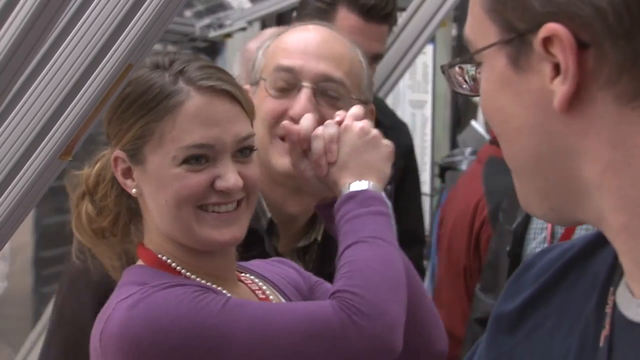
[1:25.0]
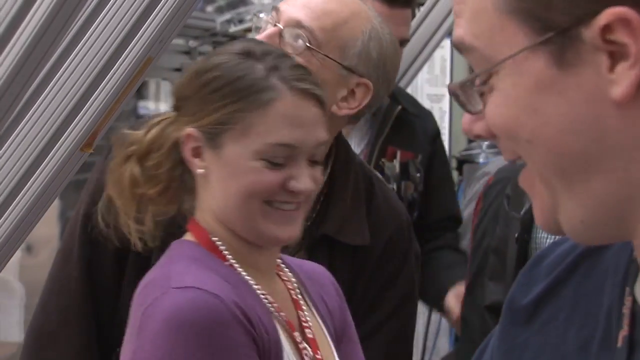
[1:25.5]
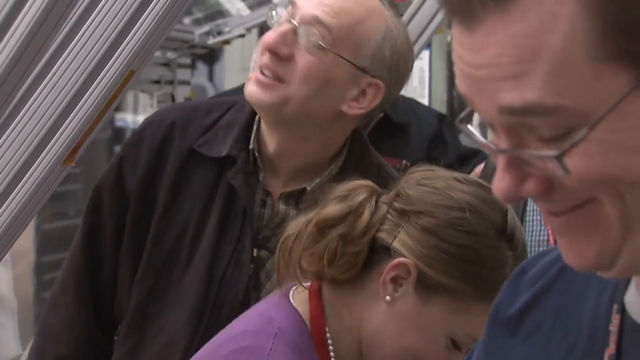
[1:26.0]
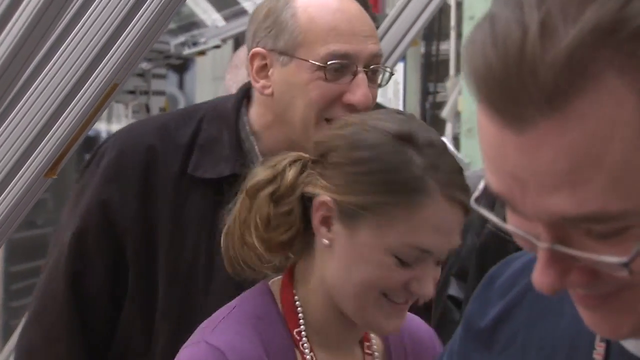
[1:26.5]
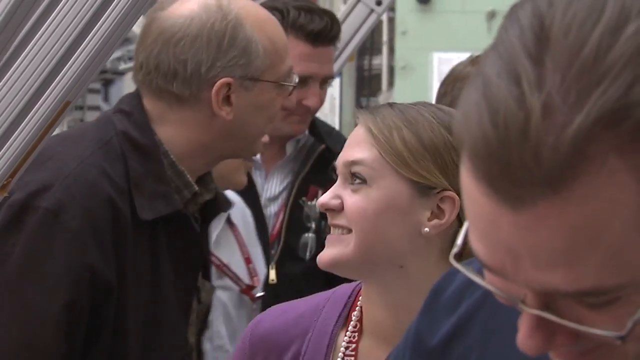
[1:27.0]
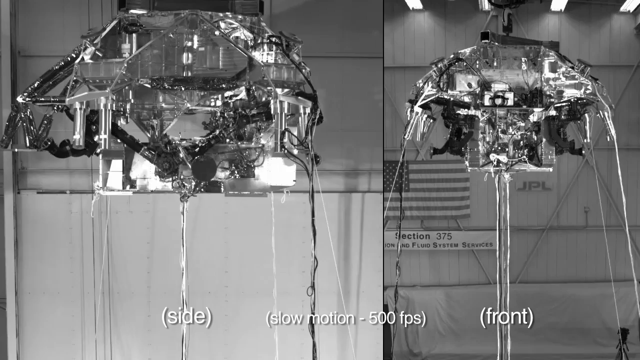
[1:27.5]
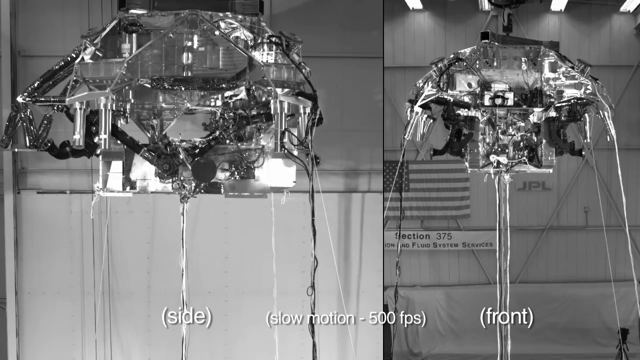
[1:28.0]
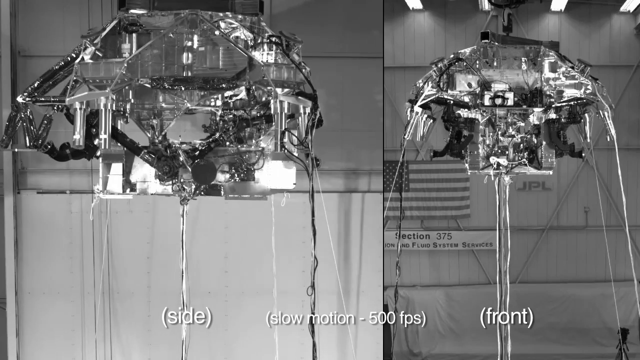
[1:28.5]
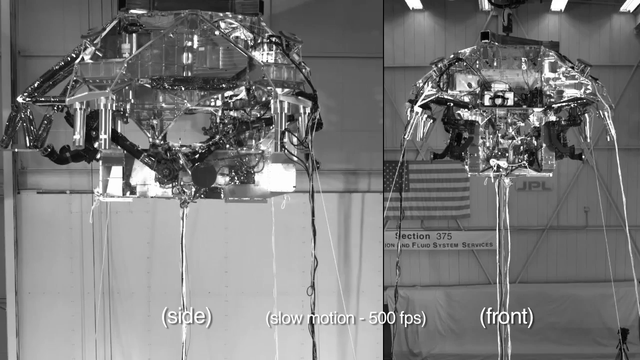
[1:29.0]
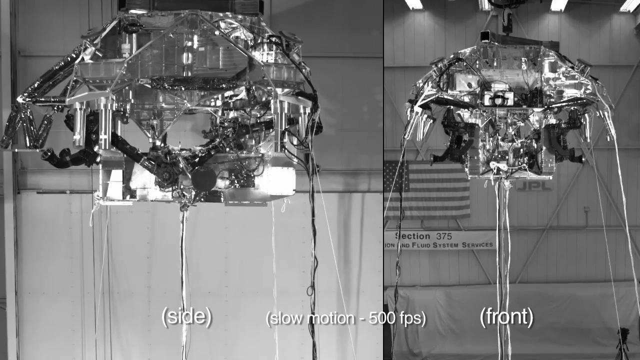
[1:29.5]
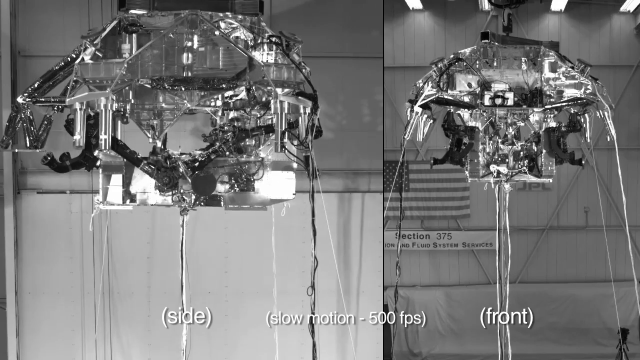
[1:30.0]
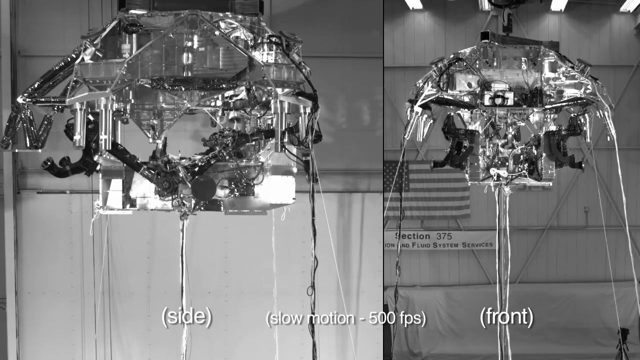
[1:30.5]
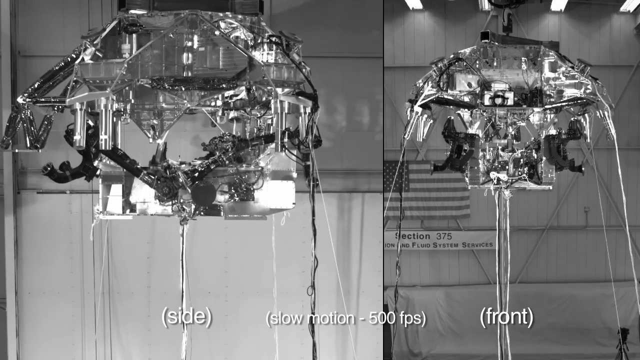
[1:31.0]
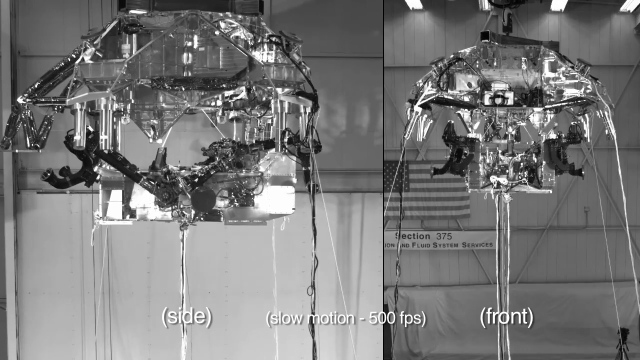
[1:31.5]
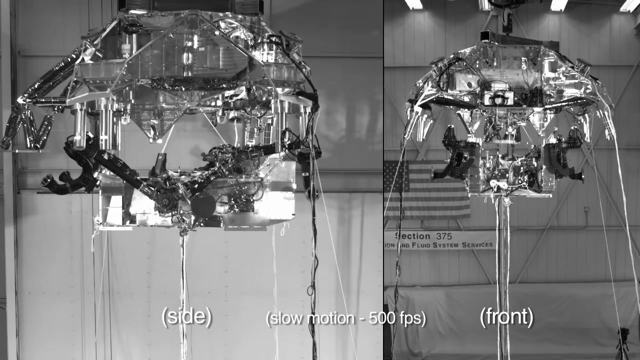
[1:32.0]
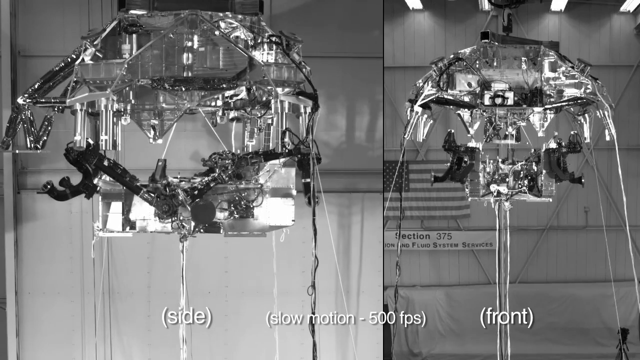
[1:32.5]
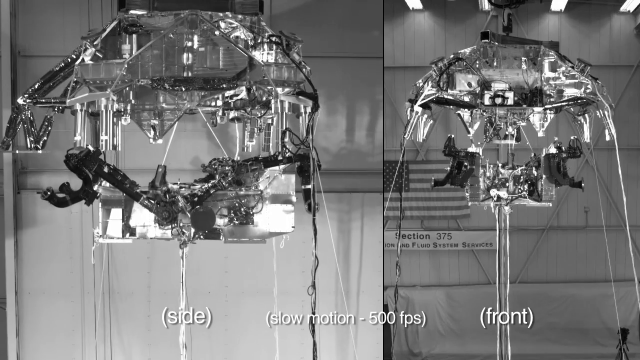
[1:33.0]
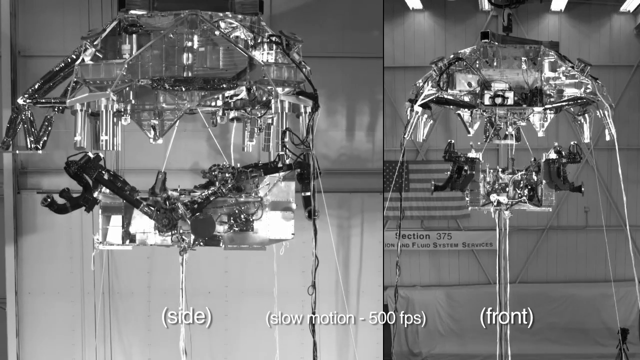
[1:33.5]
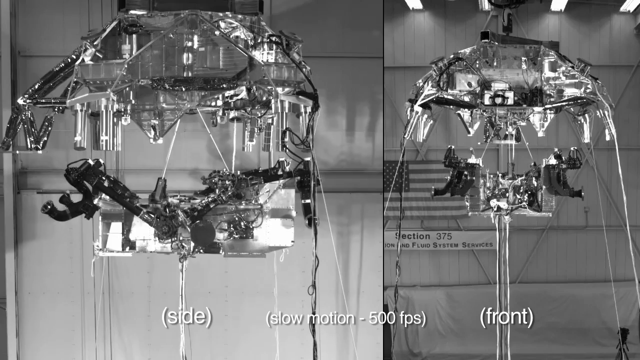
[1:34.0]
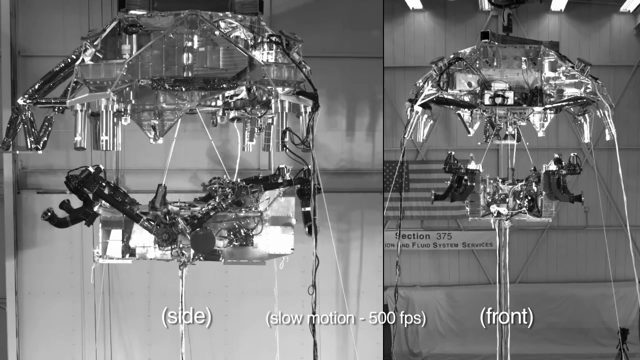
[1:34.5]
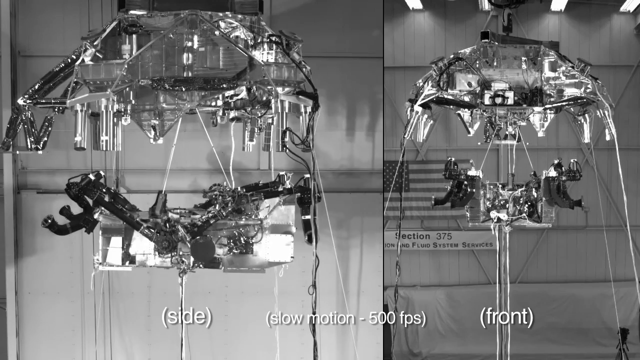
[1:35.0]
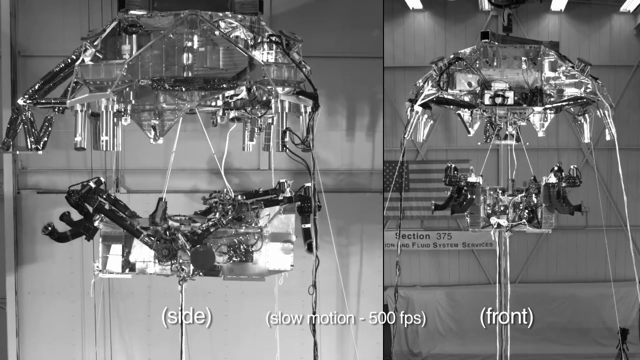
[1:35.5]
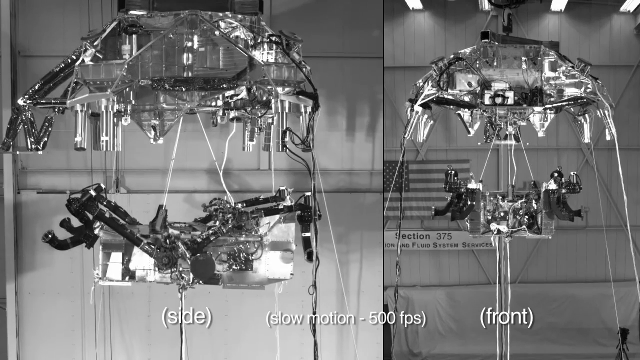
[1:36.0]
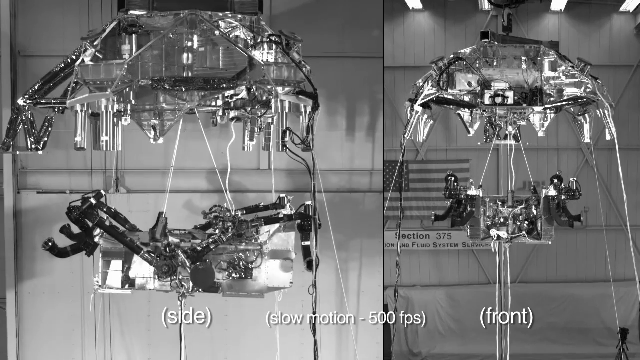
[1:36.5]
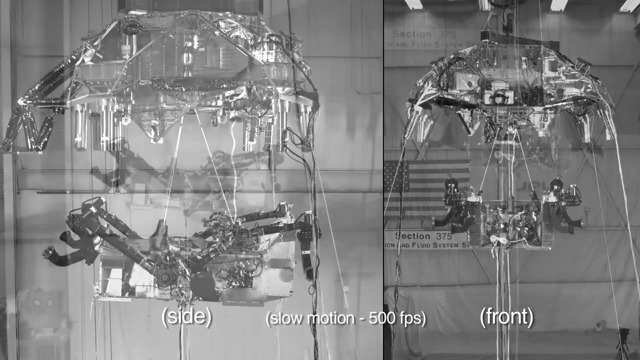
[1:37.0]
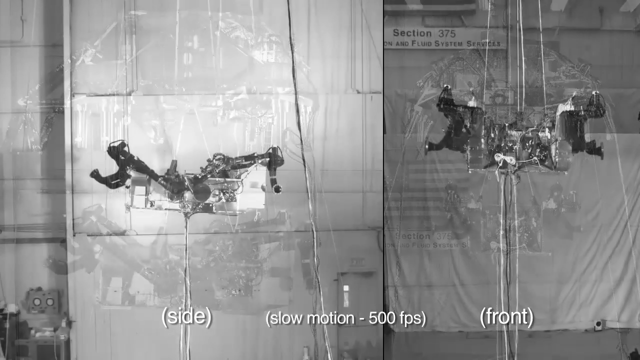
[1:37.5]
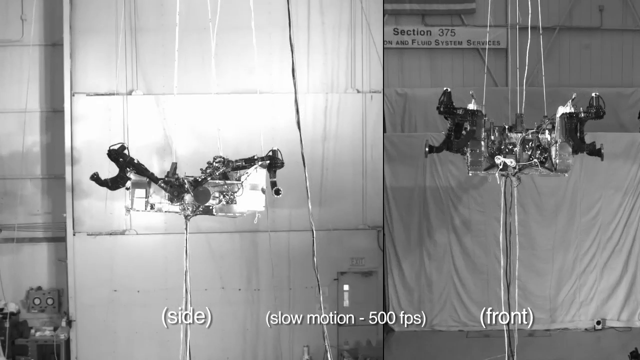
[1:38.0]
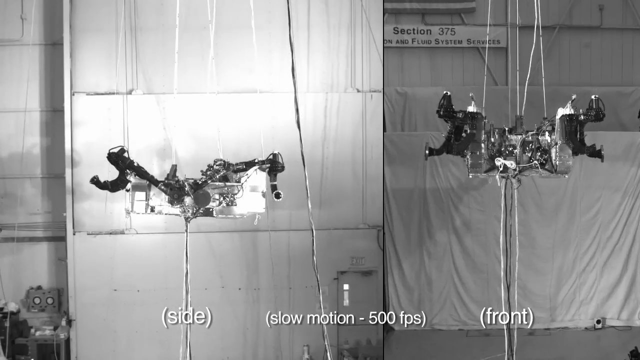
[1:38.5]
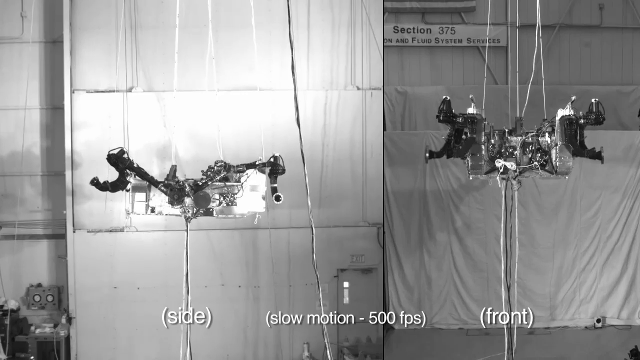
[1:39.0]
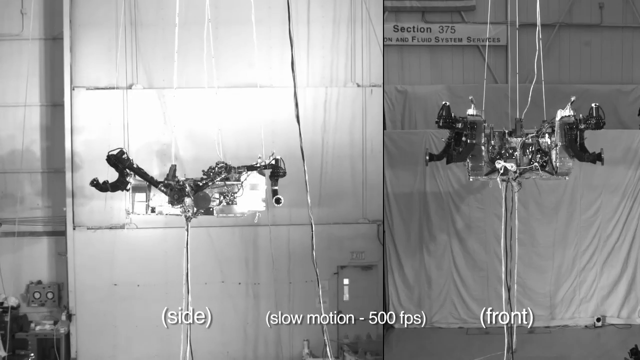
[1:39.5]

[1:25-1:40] A woman and a man talk to each other, clapping and smiling, with a couple of people behind them, all packed closely together. Next comes a slow-motion view of the rover separating into top and bottom. The left side shows a side view and the right side a front view, both in slow motion. At the bottom, text reads "(side)" on the left, "(front)" on the right, and "(500 FPS)" in the middle. The footage is in black, white and gray rather than vibrant colors.